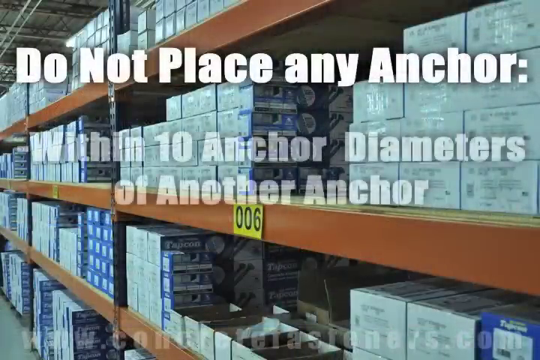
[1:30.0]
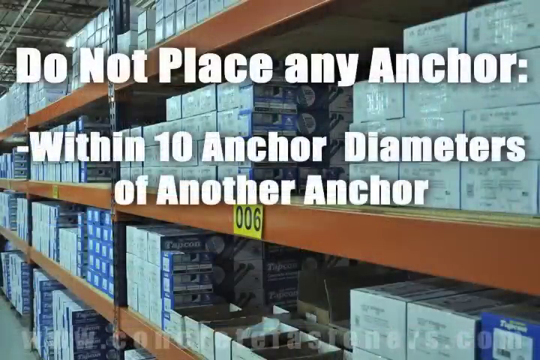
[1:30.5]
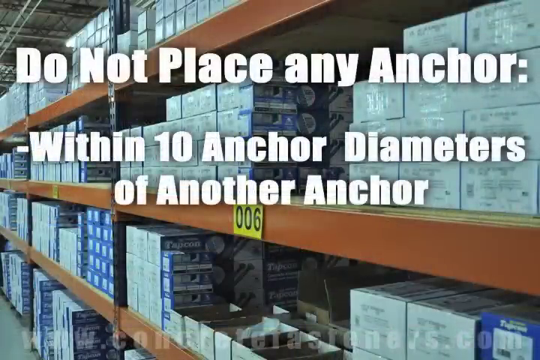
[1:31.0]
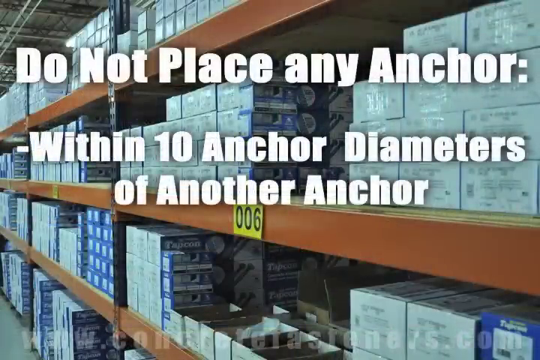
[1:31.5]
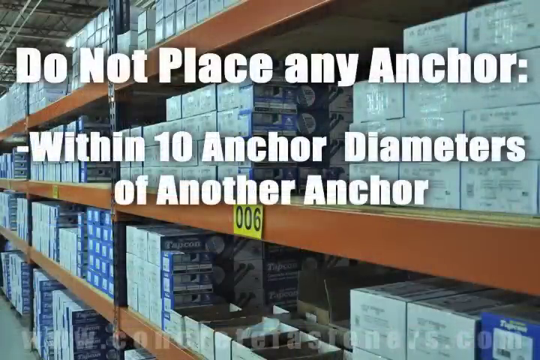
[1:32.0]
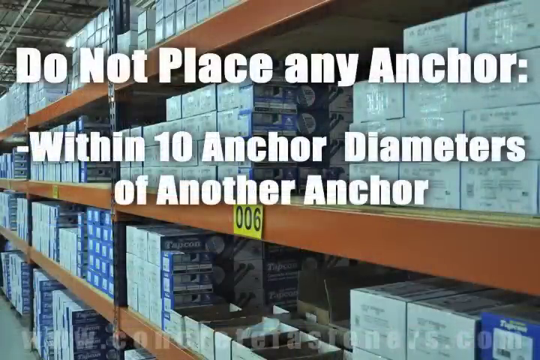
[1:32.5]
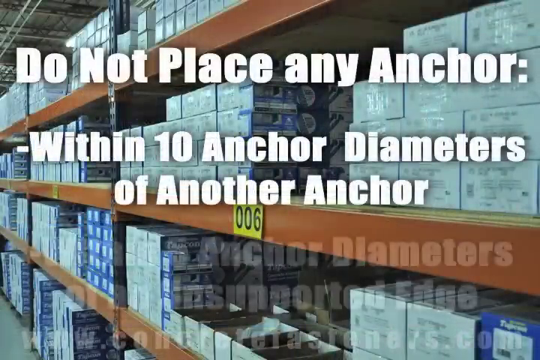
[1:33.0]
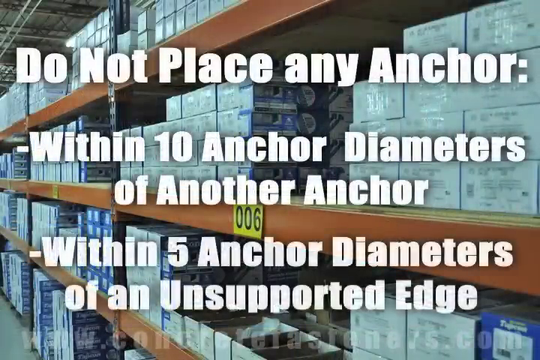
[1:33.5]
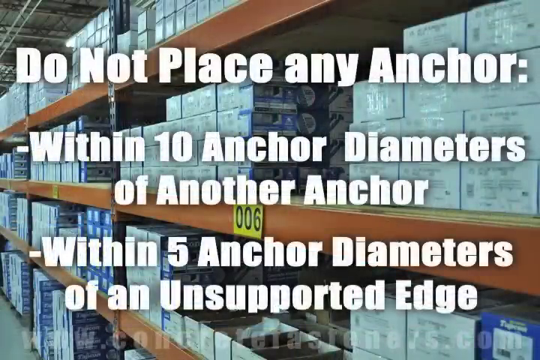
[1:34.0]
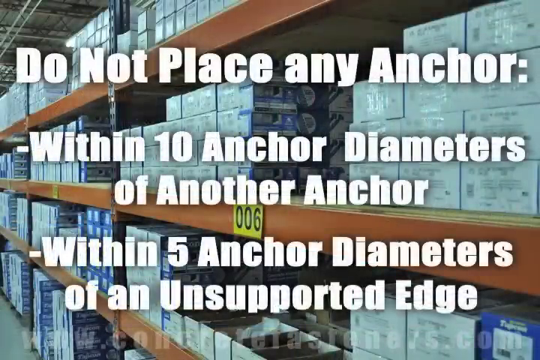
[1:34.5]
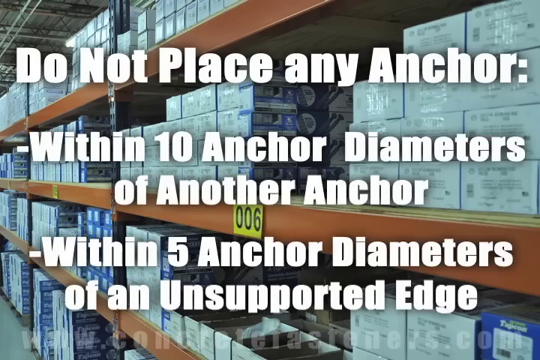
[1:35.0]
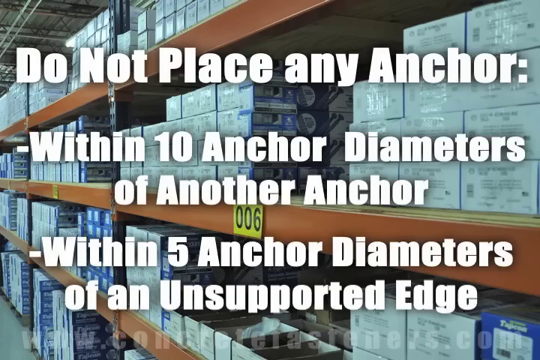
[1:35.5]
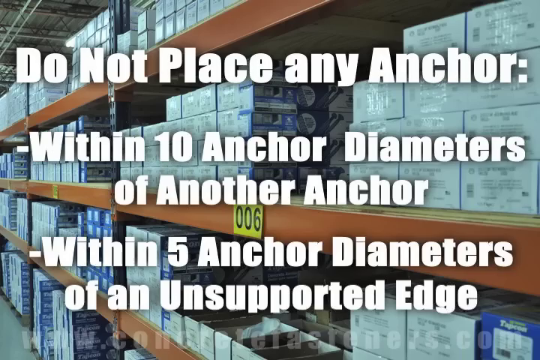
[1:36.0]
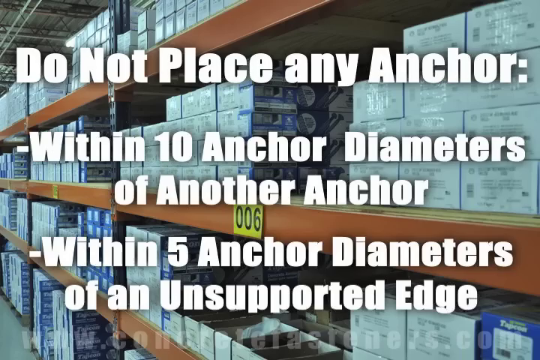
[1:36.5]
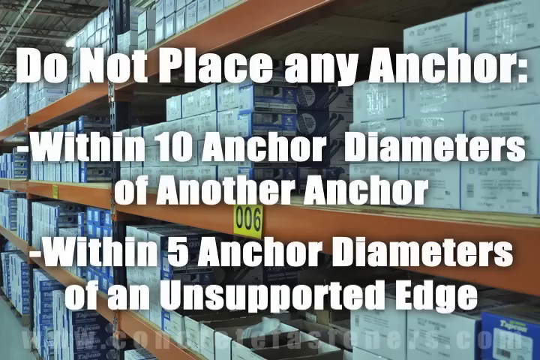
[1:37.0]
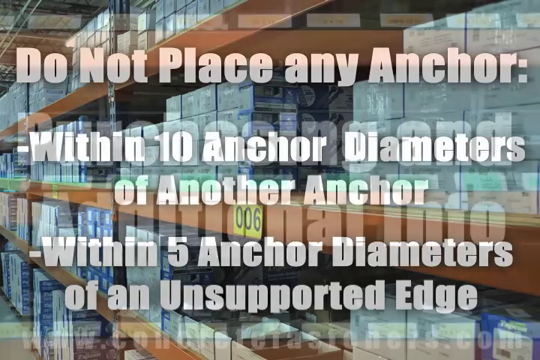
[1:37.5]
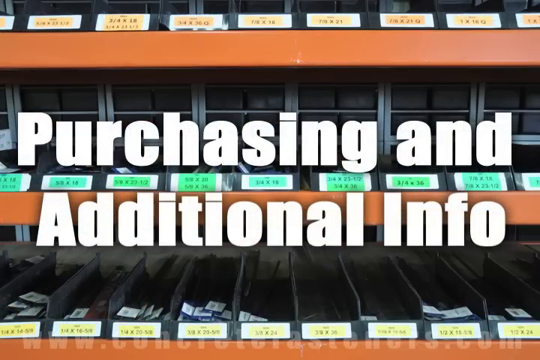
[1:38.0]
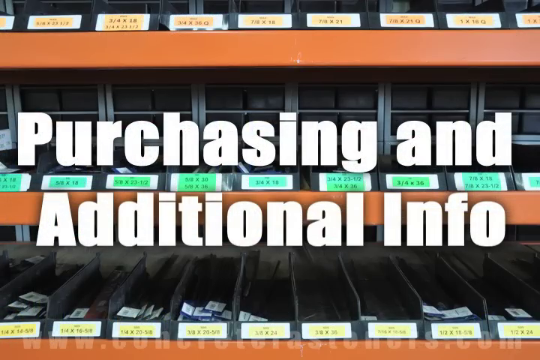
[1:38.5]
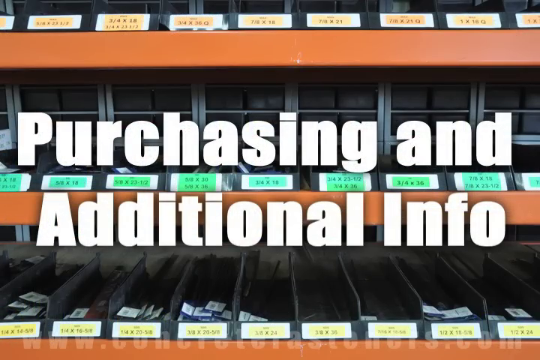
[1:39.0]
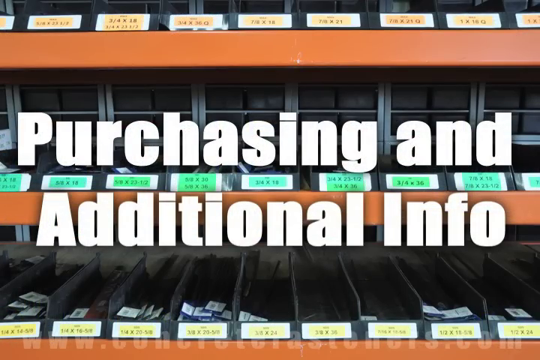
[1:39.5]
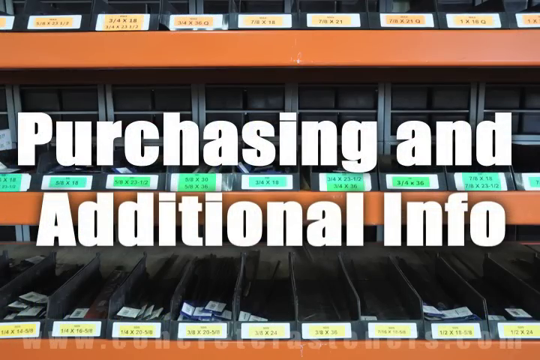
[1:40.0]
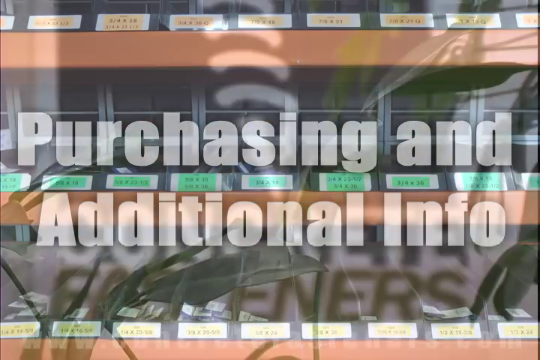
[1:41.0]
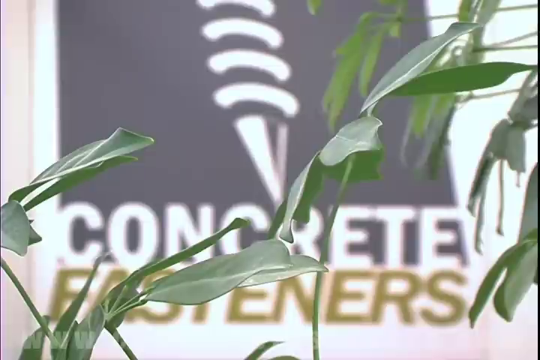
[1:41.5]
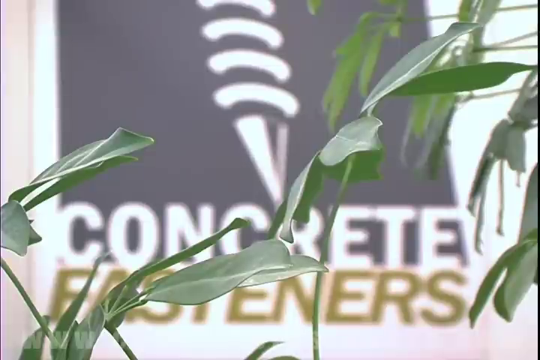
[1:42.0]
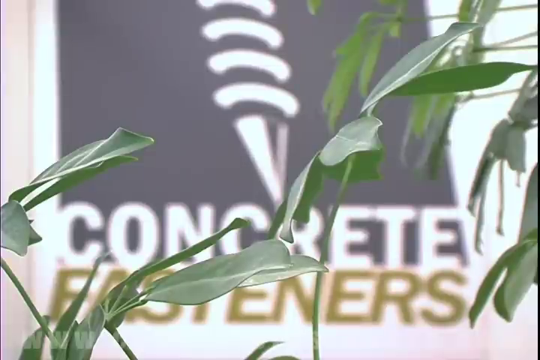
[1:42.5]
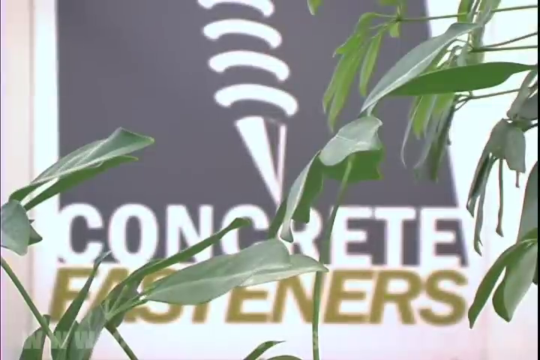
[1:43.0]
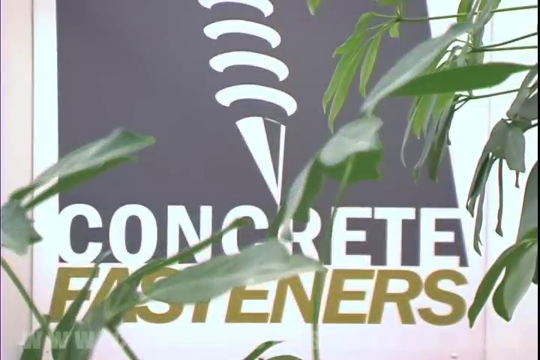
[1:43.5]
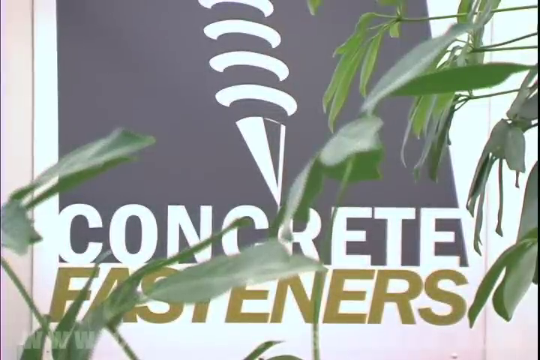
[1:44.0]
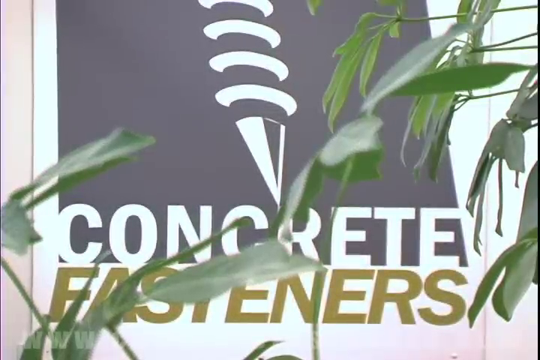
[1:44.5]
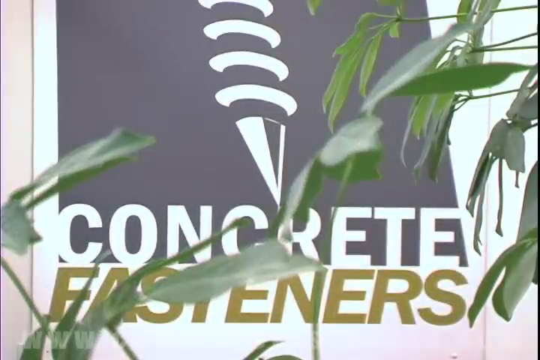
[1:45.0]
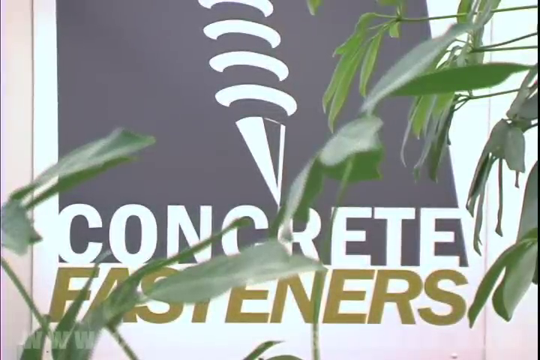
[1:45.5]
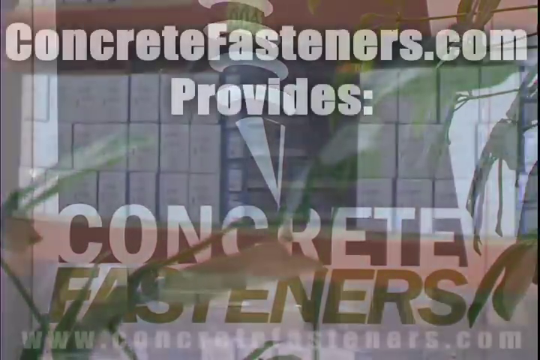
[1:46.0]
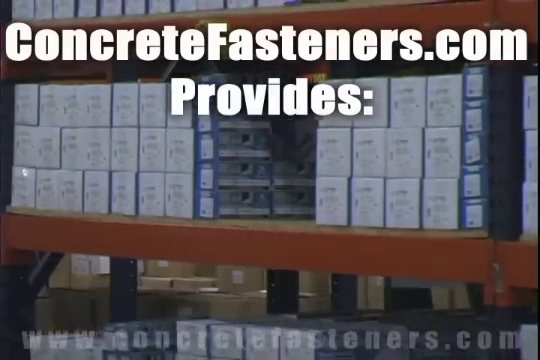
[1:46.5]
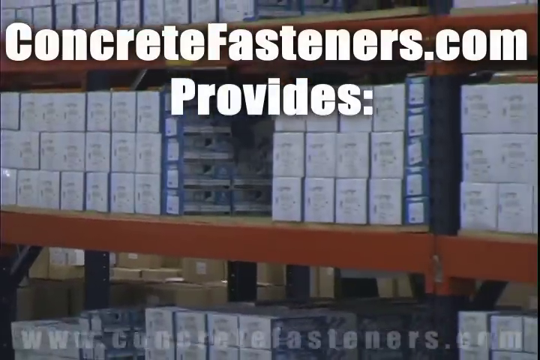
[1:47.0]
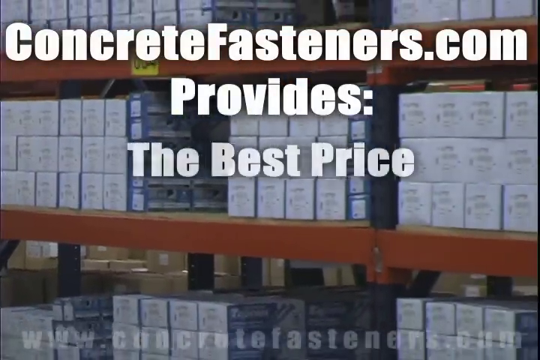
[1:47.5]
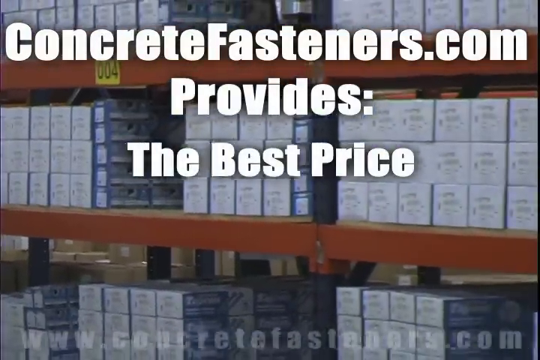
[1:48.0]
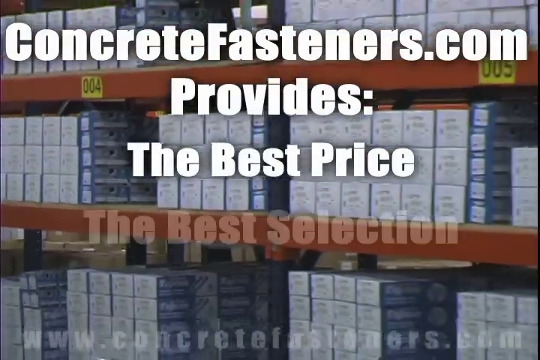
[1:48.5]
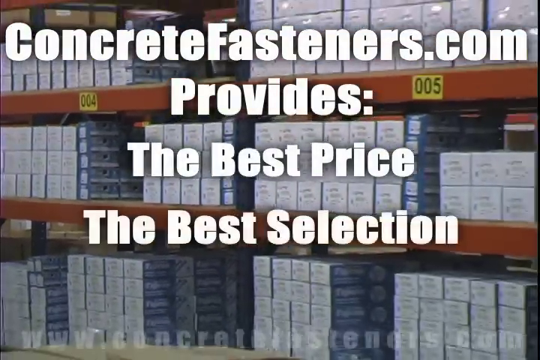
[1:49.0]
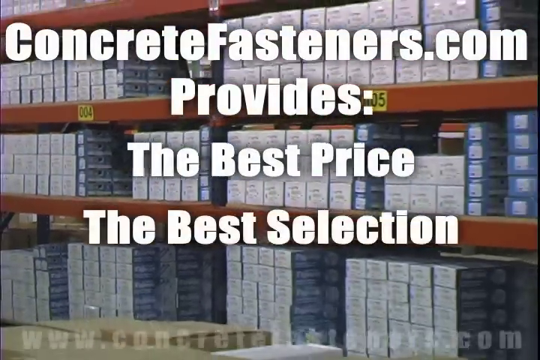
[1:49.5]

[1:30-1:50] The page continues with where not to place the anchor: not within 10 anchor diameters of another anchor, and not within 5 anchor diameters of an unsupported edge. After that page, the view pans out to an artistic photo of a bunch of leaves, with what looks like a poster behind it that says "concrete fasteners." A following section states that concrete fasteners.com provides the best price, the best selection and the best service.